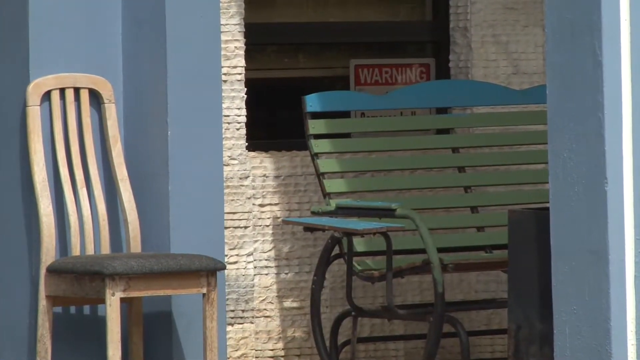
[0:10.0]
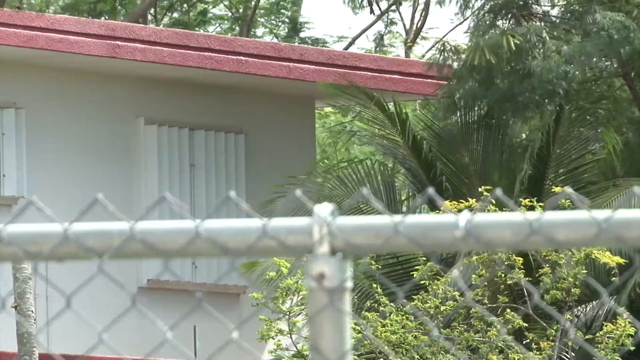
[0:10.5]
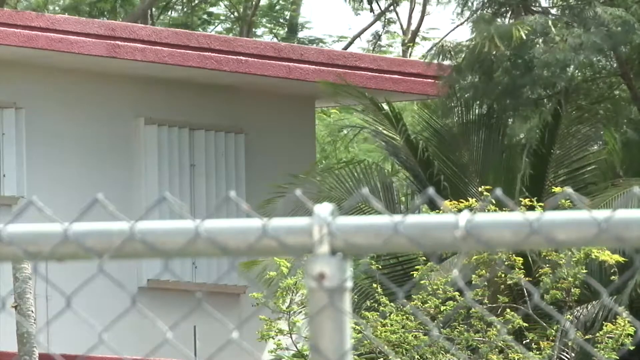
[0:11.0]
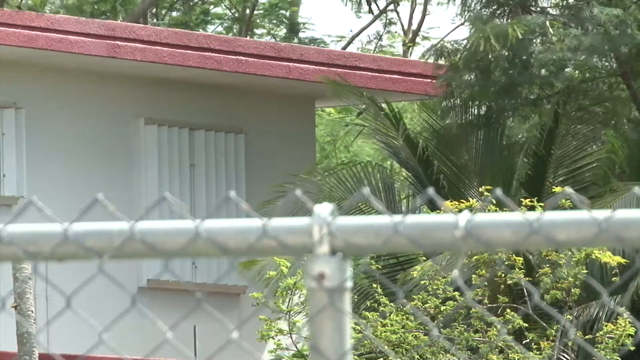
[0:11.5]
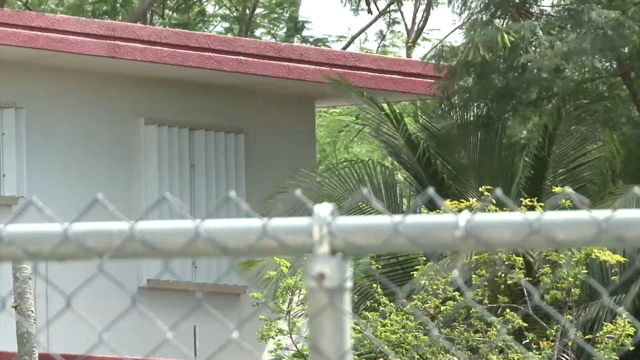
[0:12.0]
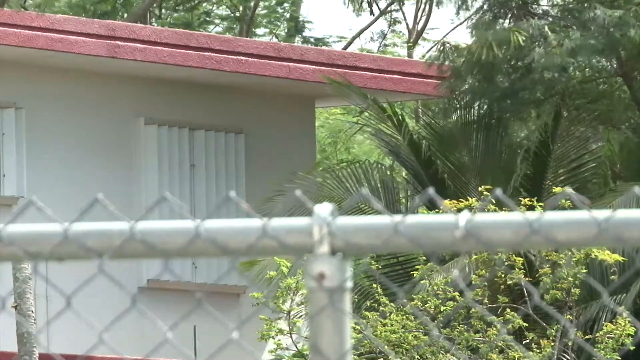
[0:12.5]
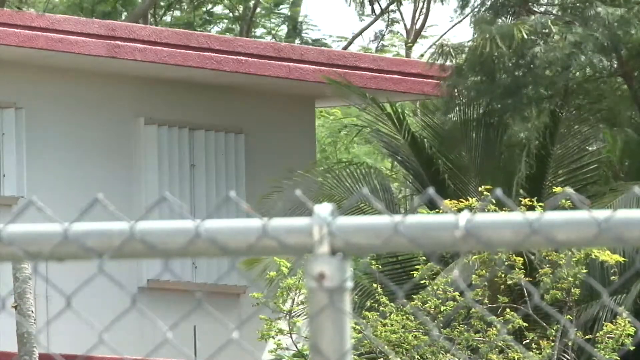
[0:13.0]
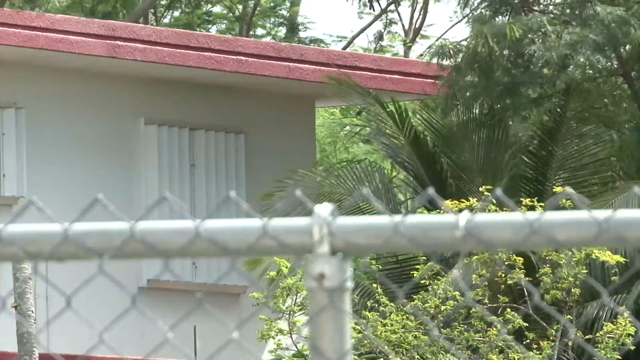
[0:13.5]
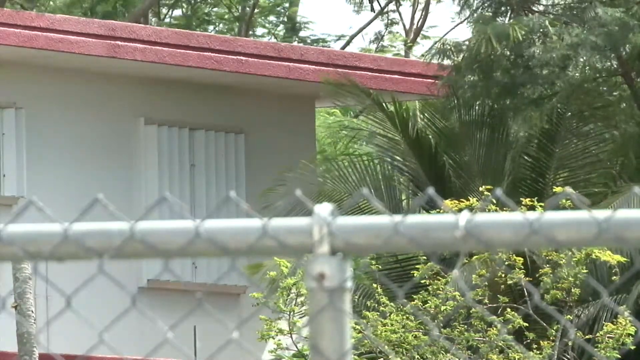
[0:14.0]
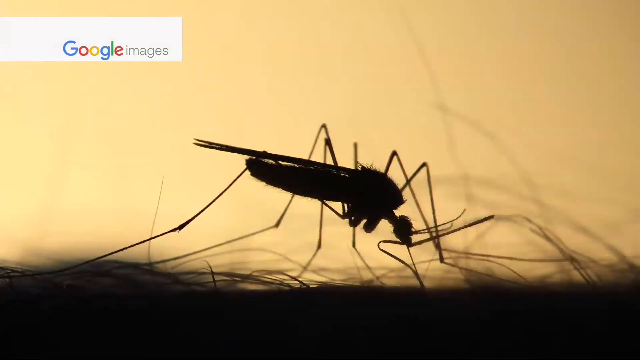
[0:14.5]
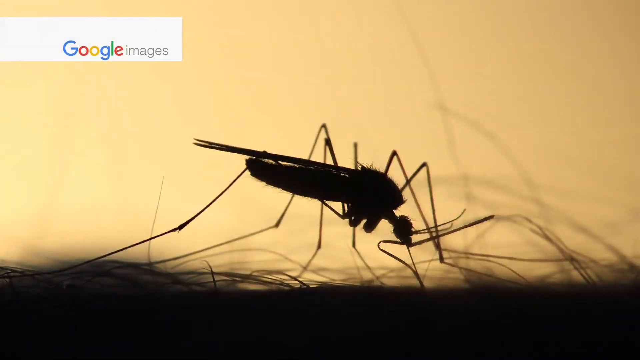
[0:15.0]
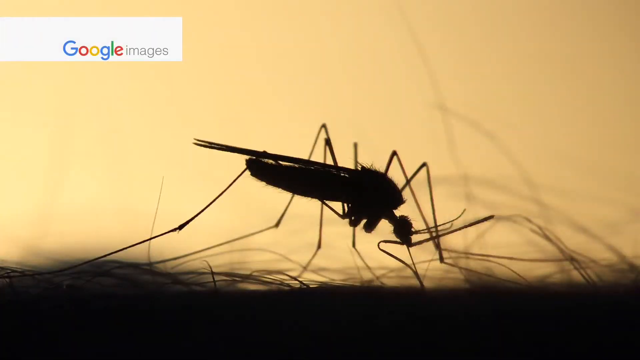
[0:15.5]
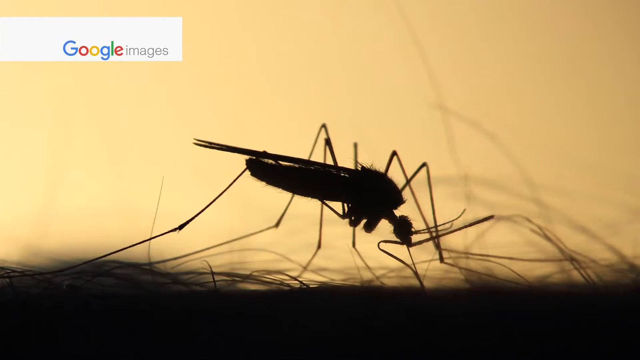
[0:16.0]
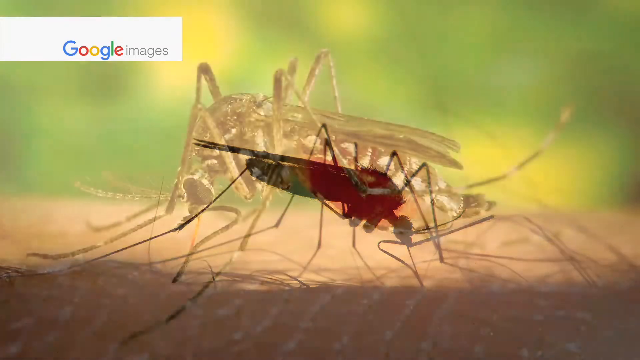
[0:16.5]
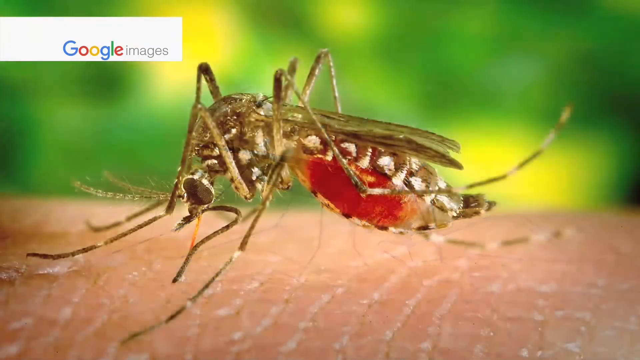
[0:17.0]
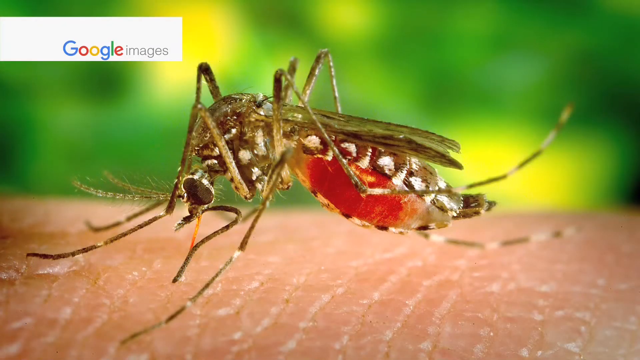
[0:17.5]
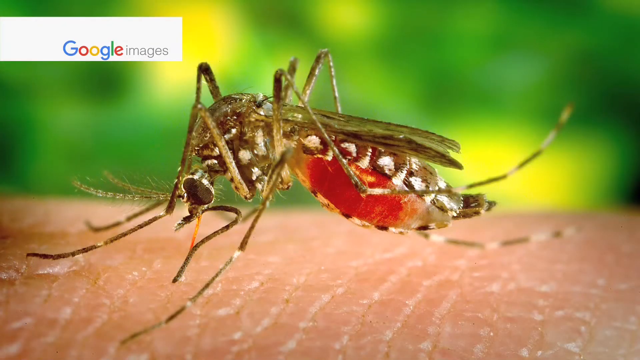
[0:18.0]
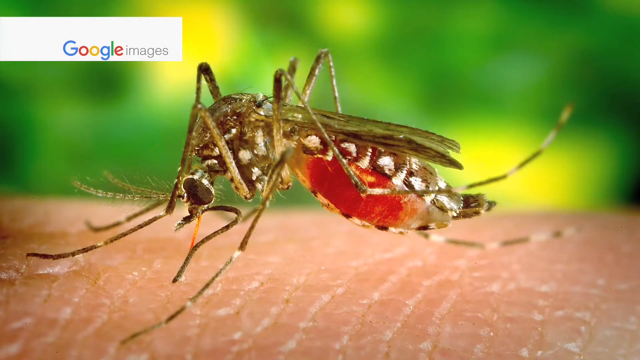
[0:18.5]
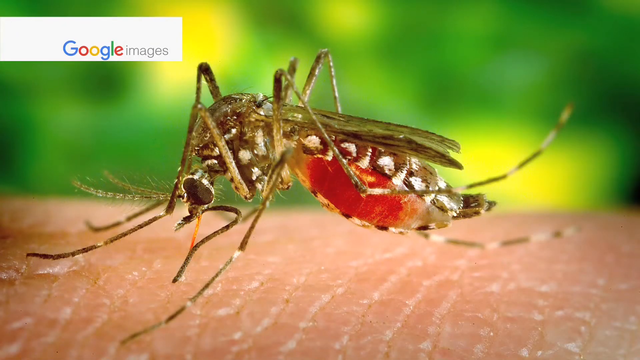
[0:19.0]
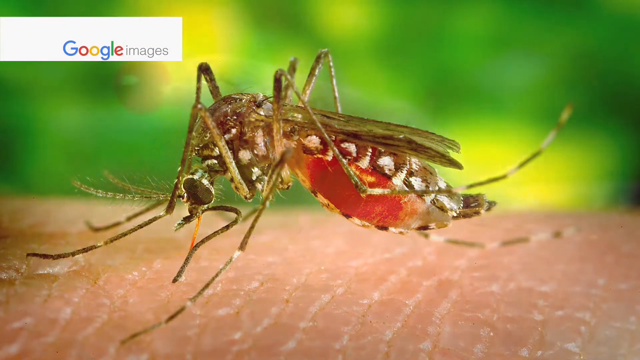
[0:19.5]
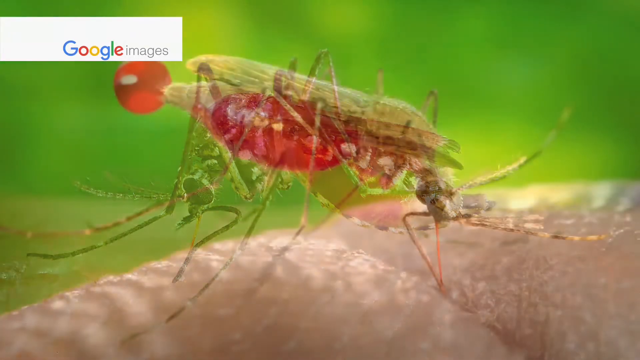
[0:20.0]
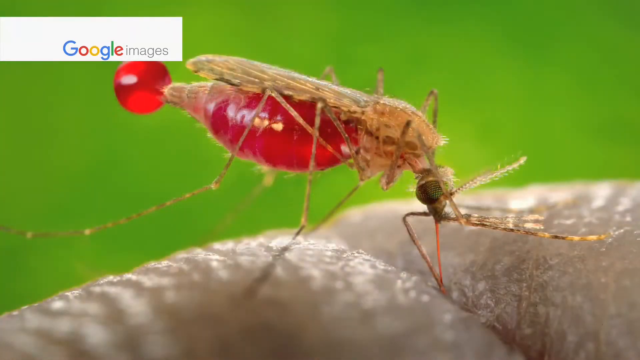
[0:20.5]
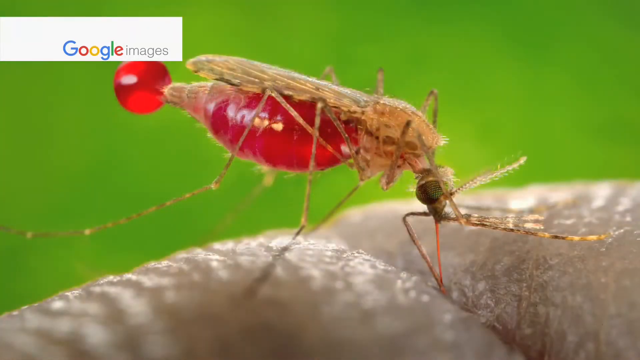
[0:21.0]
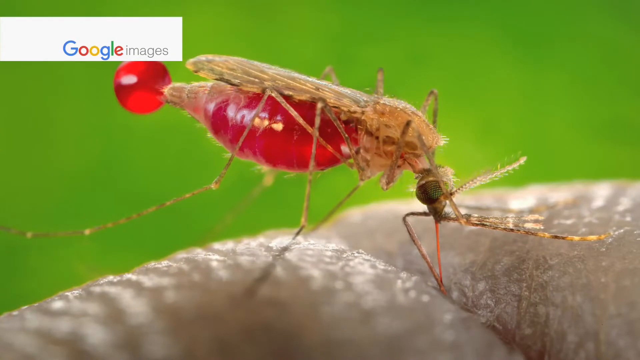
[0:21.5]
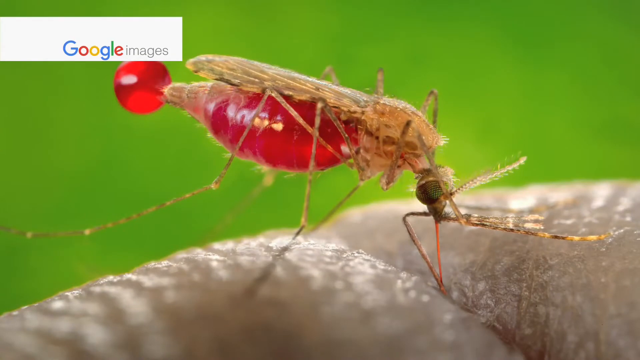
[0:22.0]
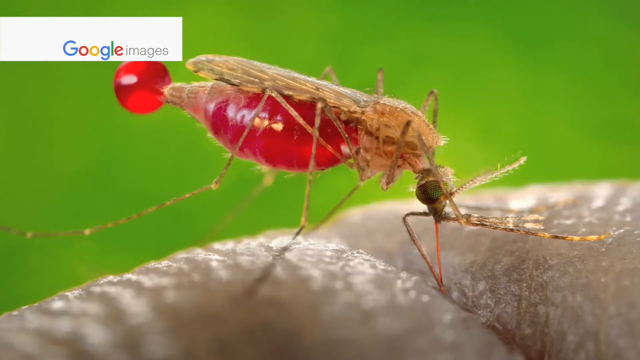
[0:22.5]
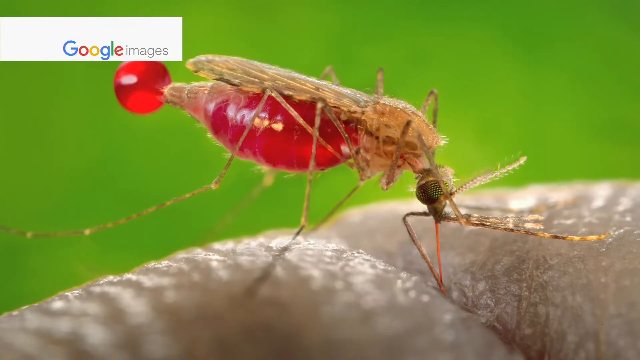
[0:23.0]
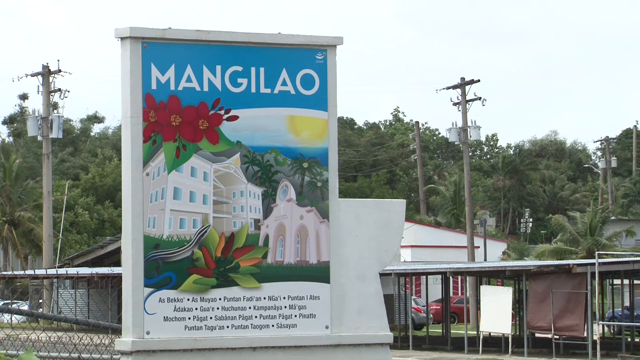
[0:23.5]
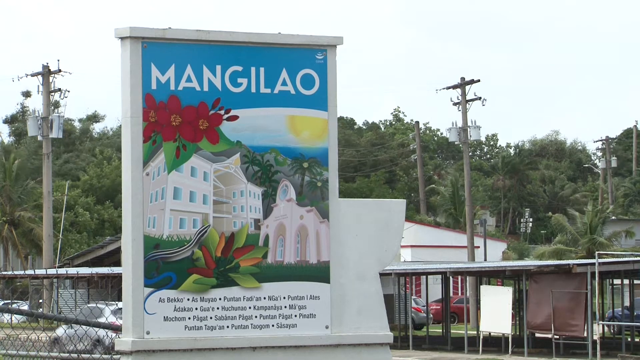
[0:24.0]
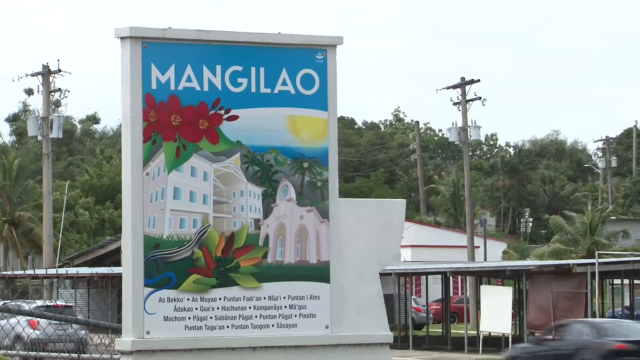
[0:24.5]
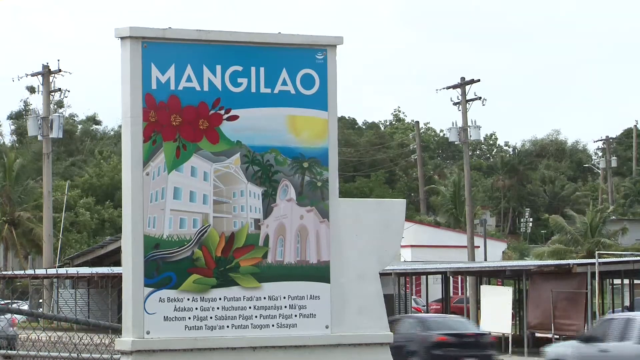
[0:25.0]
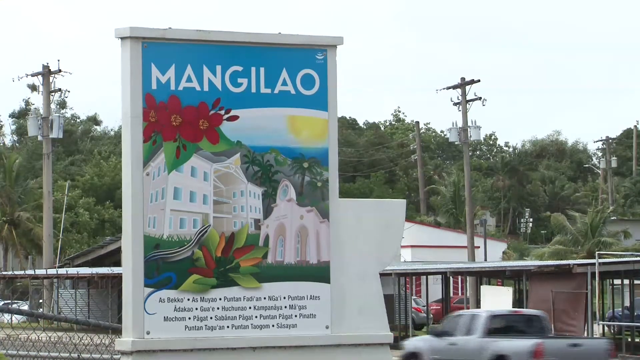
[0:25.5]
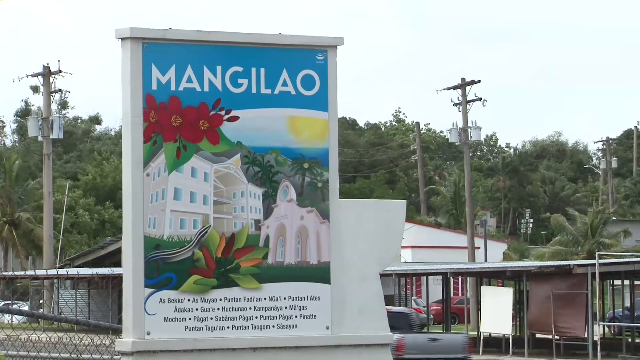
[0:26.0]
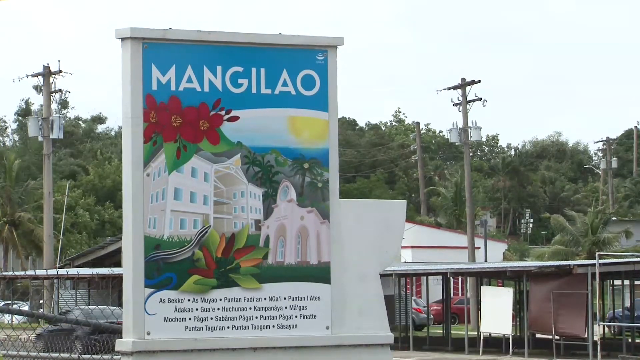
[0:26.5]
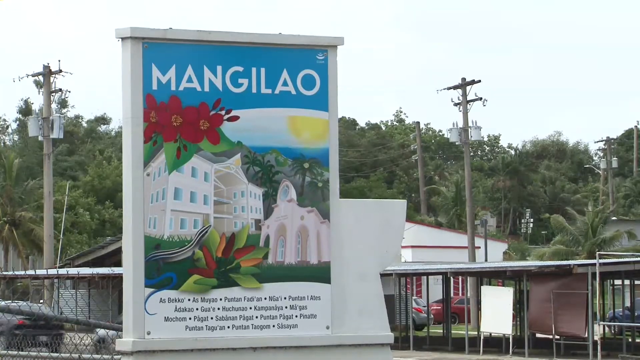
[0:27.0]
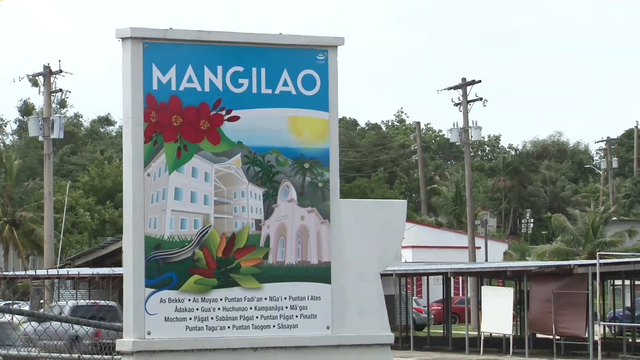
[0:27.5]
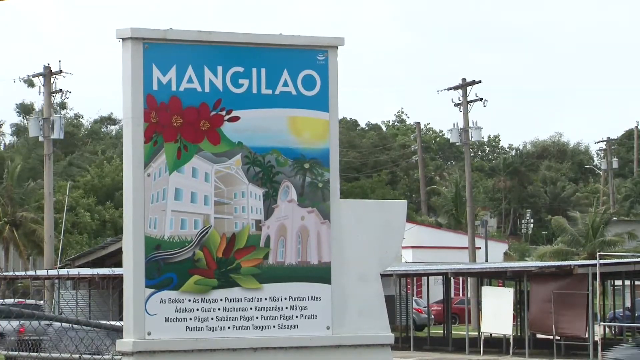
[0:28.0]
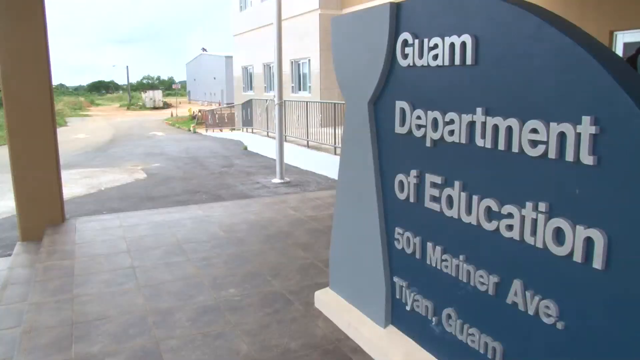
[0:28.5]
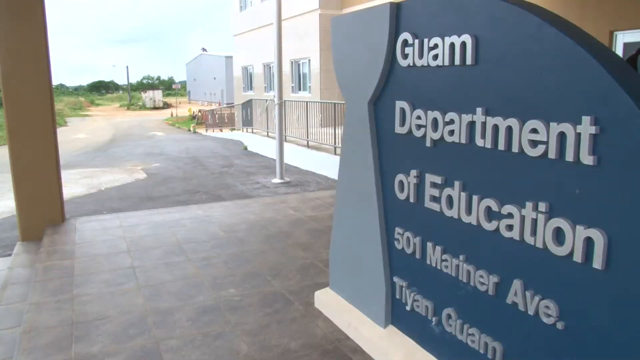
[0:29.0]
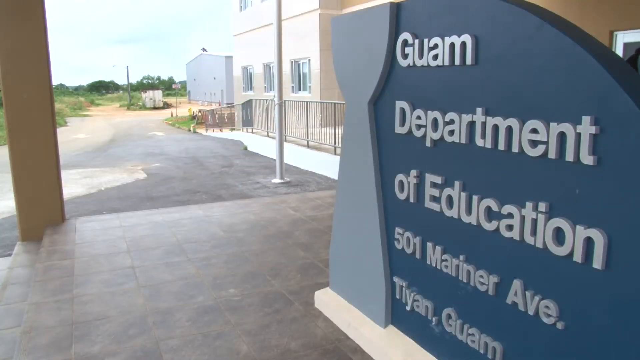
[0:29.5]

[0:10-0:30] The video is some type of public health alert. Mosquitoes are shown biting people. A sign outside of a town reads "Guam."